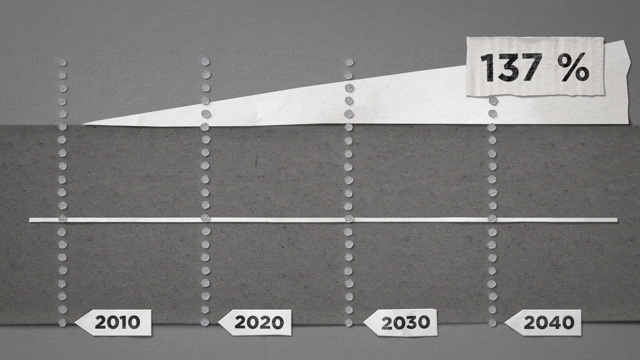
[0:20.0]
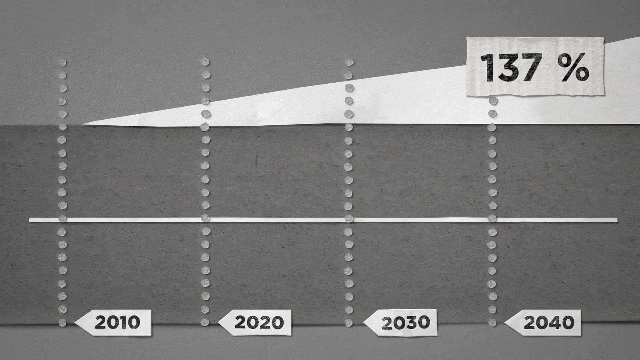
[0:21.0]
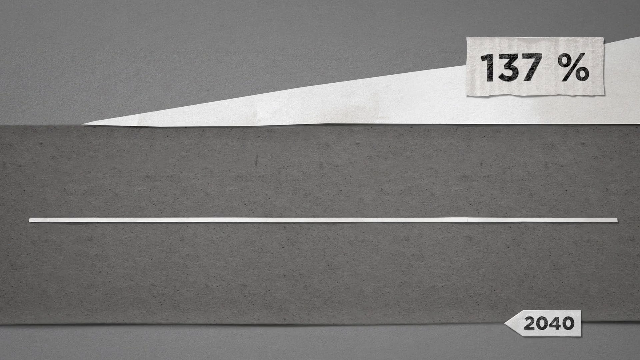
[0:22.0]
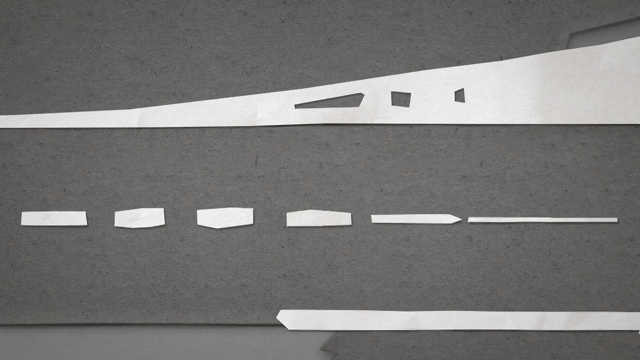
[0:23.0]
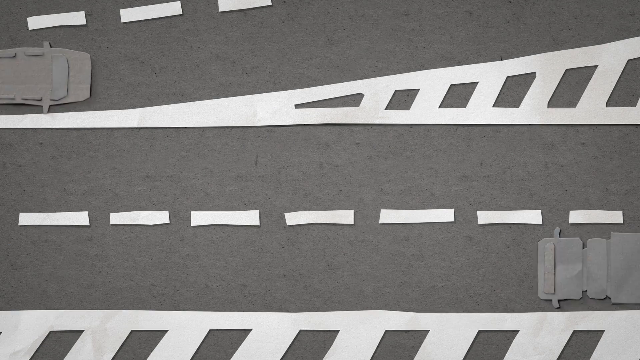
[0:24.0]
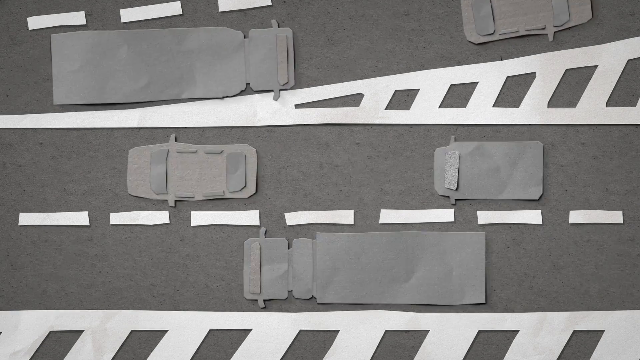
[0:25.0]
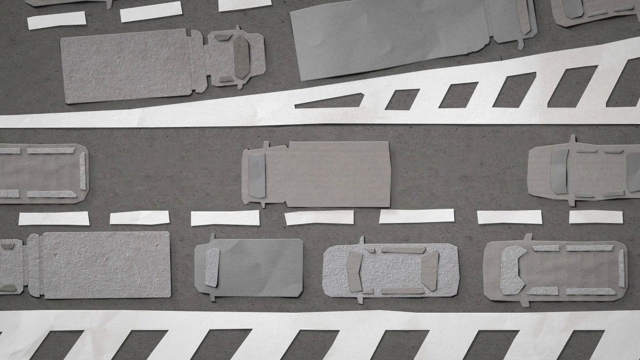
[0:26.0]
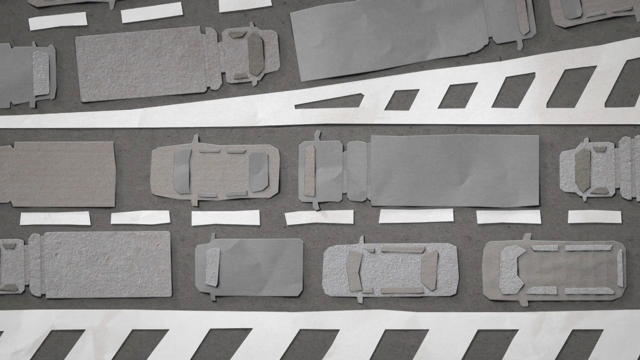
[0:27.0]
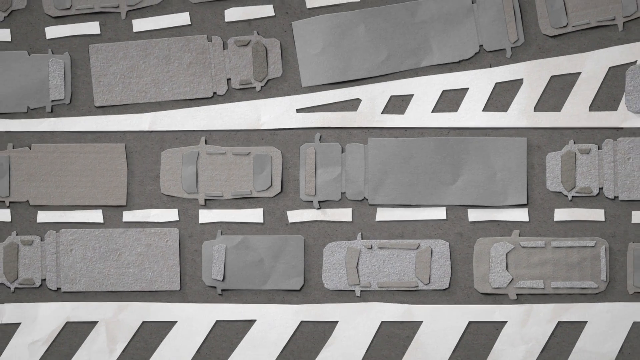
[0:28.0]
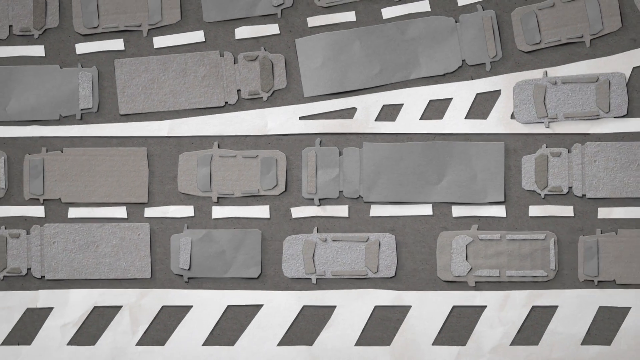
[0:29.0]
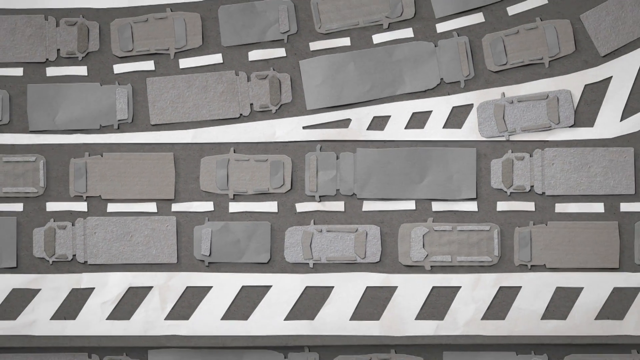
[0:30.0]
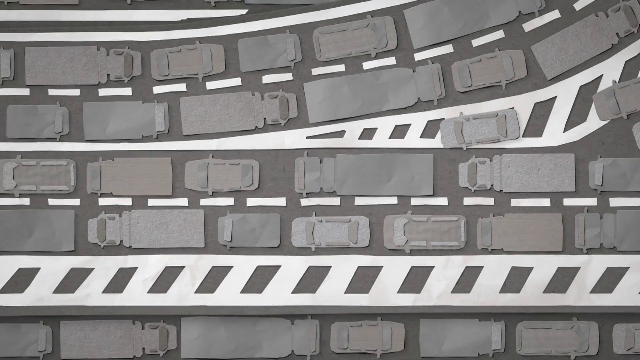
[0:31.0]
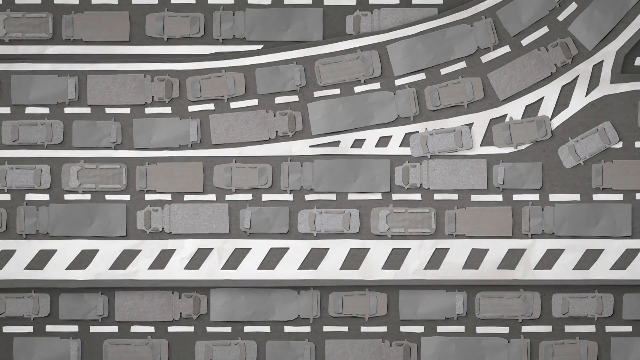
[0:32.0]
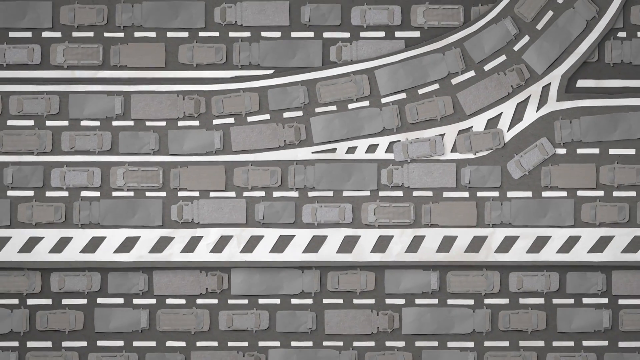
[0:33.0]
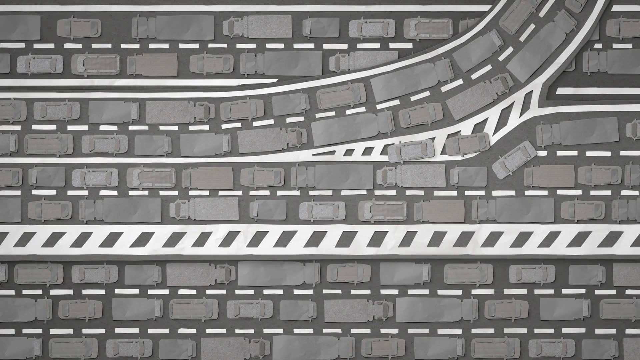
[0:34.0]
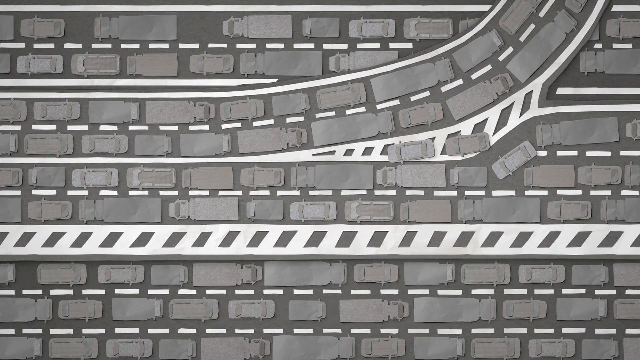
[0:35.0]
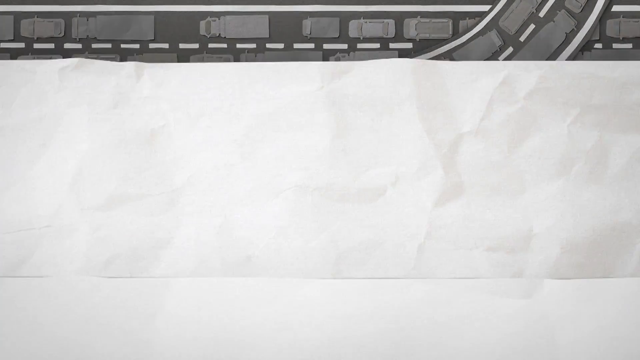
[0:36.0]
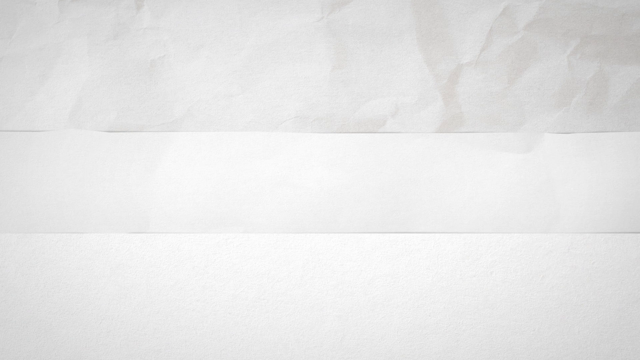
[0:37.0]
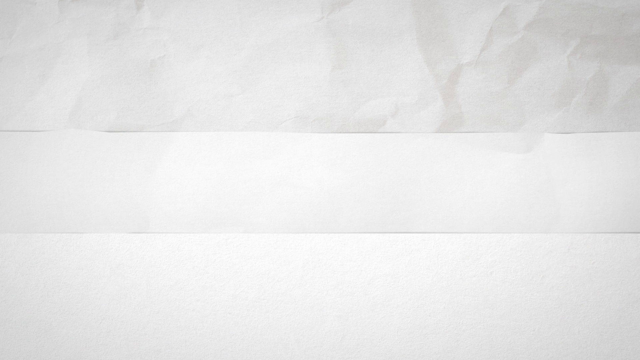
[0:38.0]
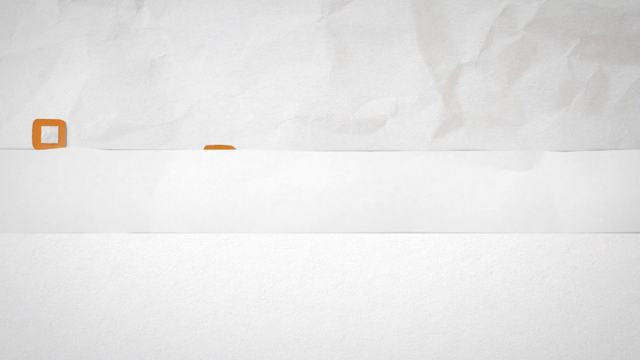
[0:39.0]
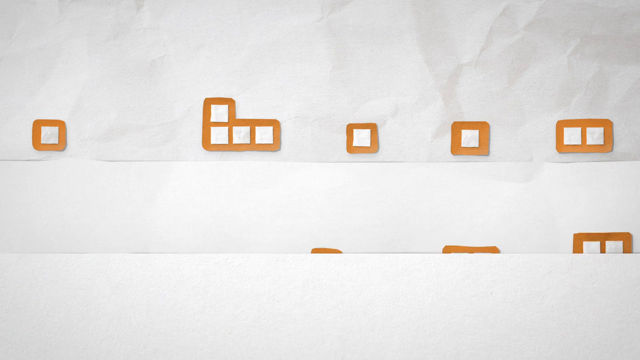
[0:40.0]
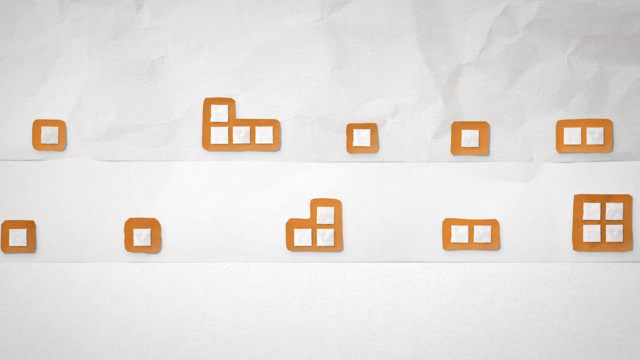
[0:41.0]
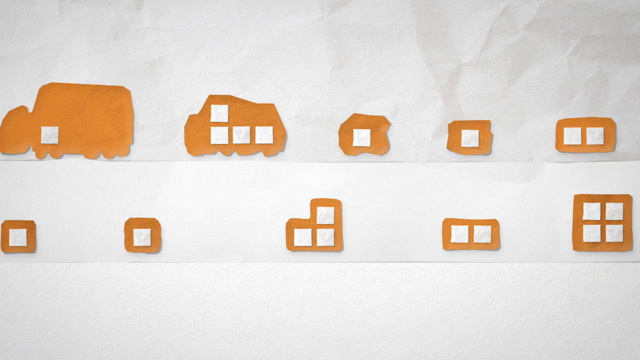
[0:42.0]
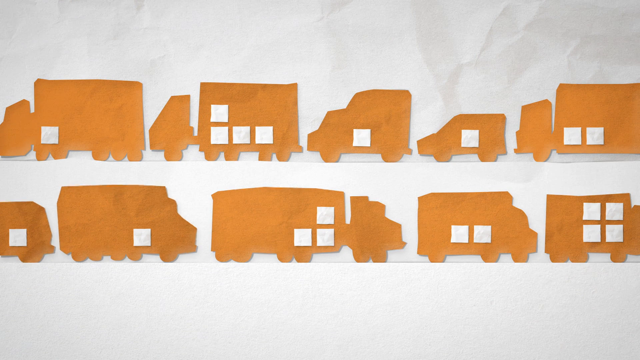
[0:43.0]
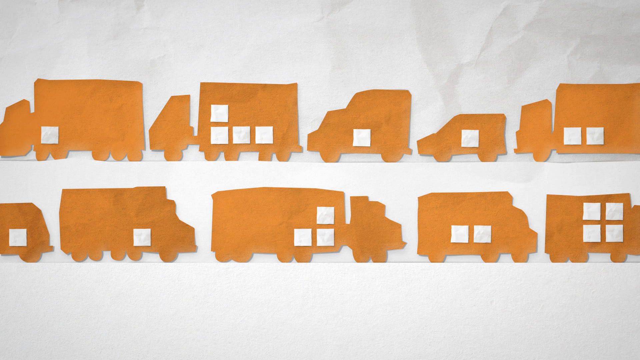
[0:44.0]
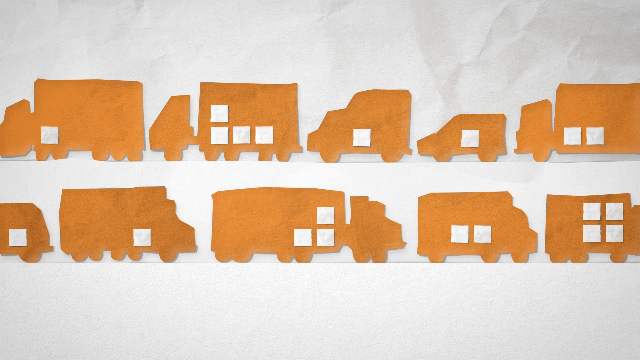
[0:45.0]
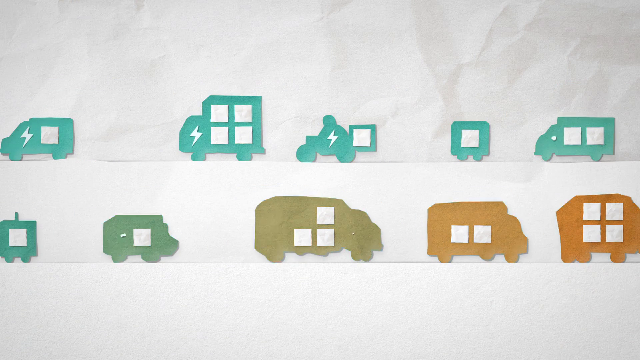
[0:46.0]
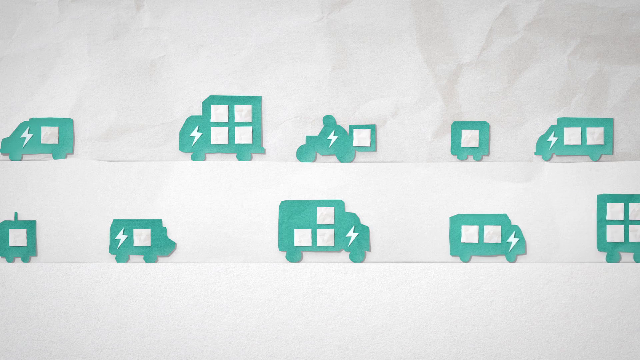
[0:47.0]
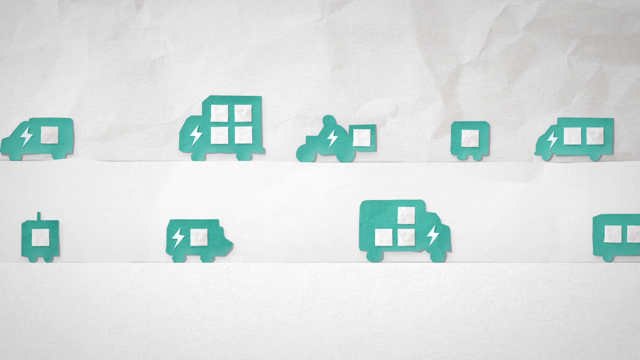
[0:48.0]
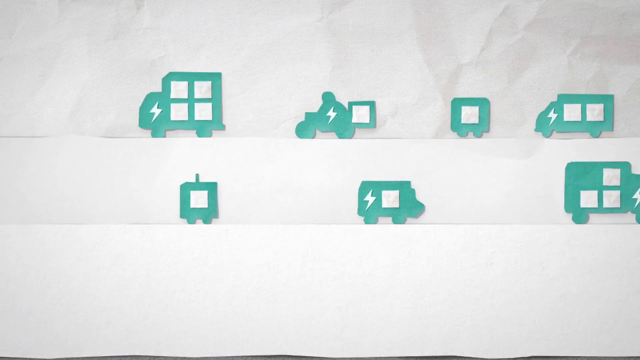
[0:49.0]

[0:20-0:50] Every decade between 2010 and 2040 is shown along with the projected percentage of the industry over that time. The gray background then changes into a road with what looks like paper cutout cars and trucks moving along it as traffic accumulates. As the traffic builds, the view zooms out, showing people trying to cut through the traffic by driving on unmarked lanes or lanes marked not for travel. The roads fade and are replaced by white paper backgrounds, the paper on top kind of crinkly. White boxes in orange outlines appear, representing packages, and the orange outlines expand into different types of trucks, each carrying a different number of packages. The orange trucks then turn blue with a little lightning symbol in them, smaller than the original trucks, and zoom off the page, with blue motorcycles interspersed among the trucks.